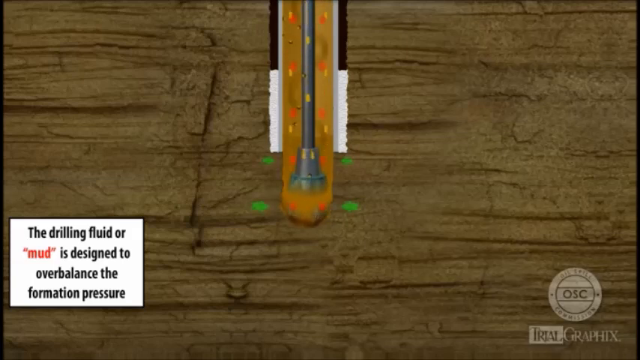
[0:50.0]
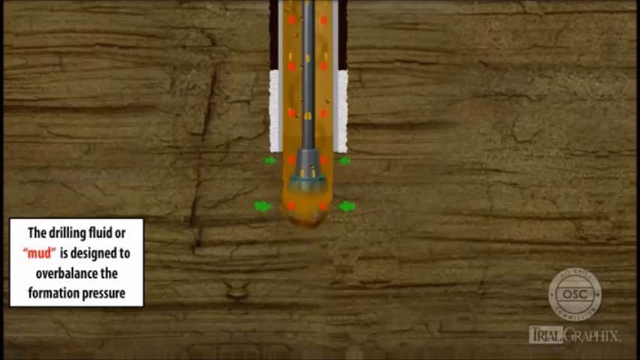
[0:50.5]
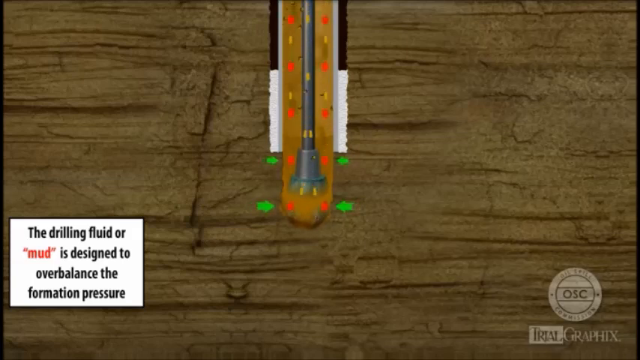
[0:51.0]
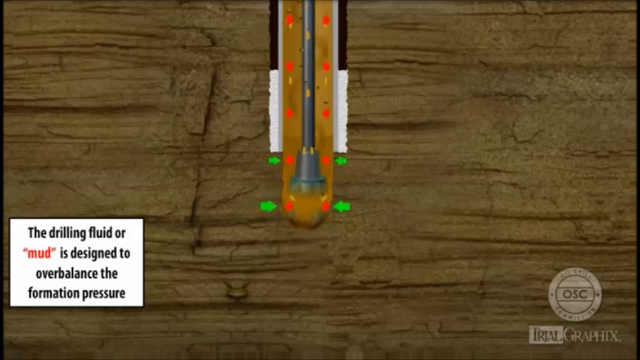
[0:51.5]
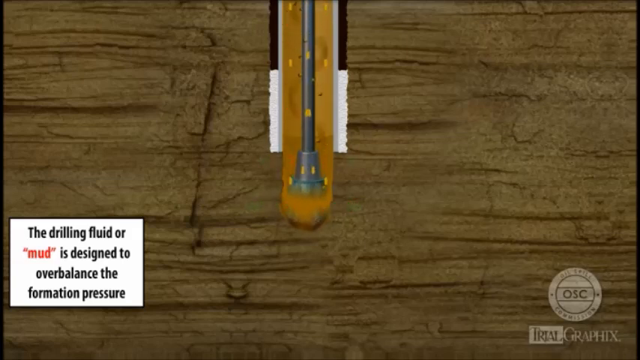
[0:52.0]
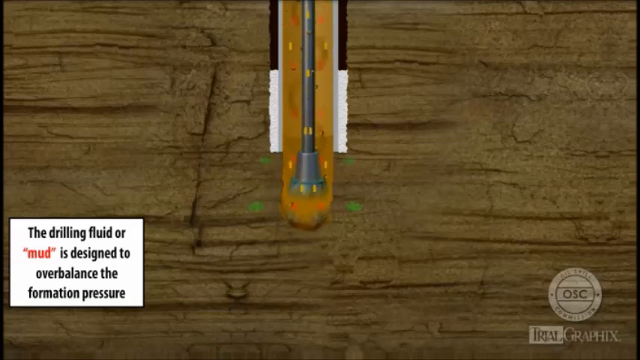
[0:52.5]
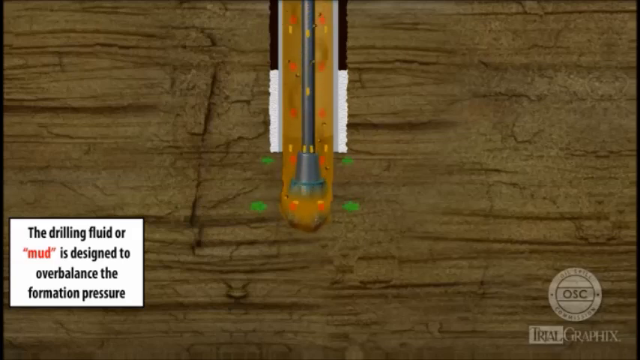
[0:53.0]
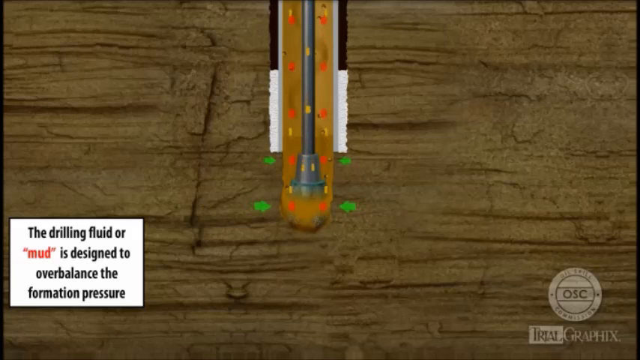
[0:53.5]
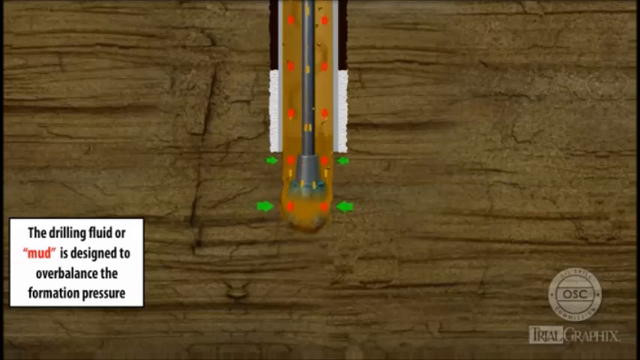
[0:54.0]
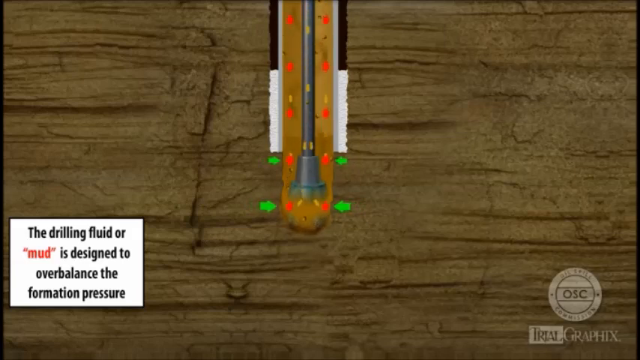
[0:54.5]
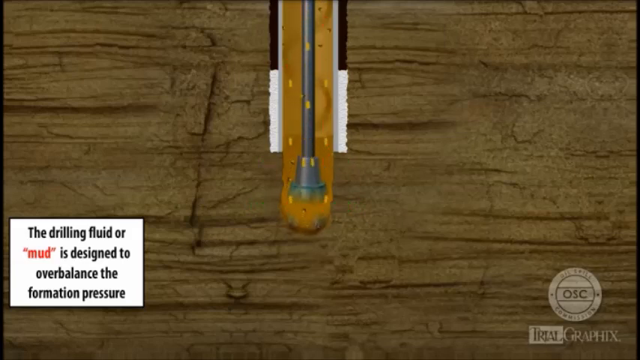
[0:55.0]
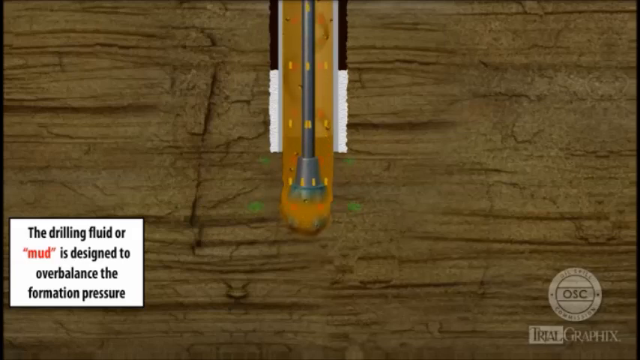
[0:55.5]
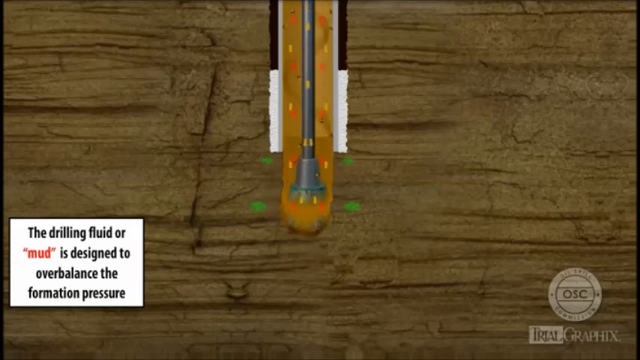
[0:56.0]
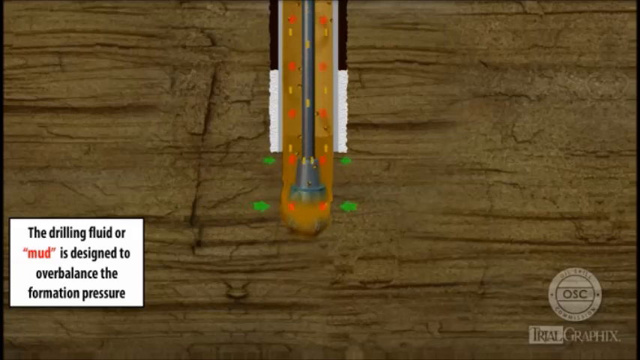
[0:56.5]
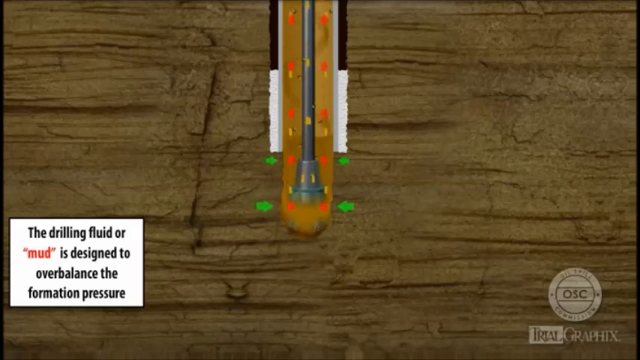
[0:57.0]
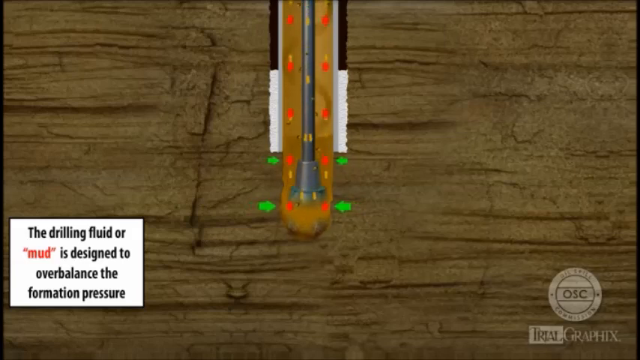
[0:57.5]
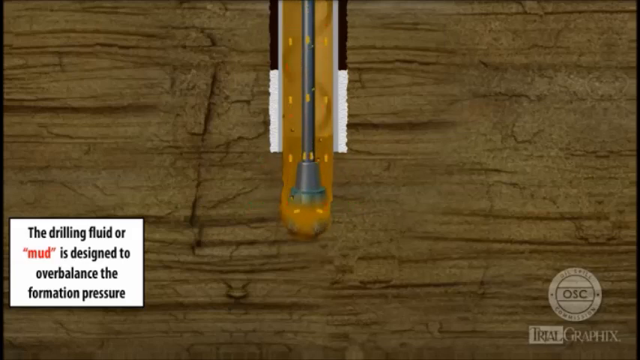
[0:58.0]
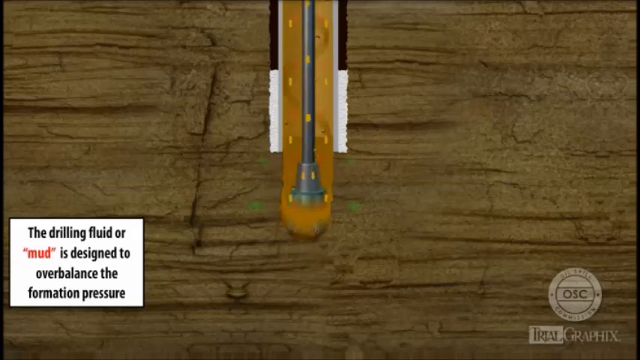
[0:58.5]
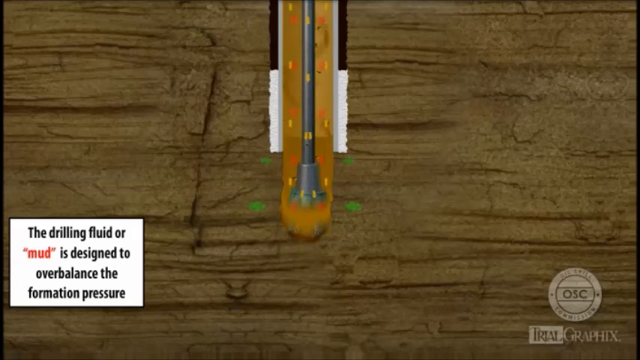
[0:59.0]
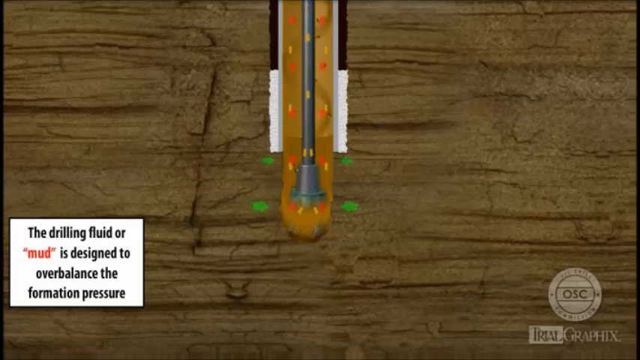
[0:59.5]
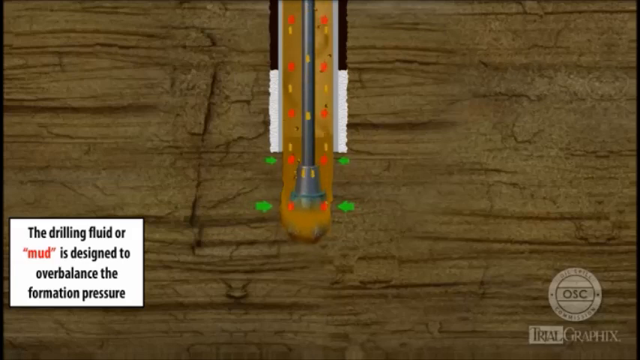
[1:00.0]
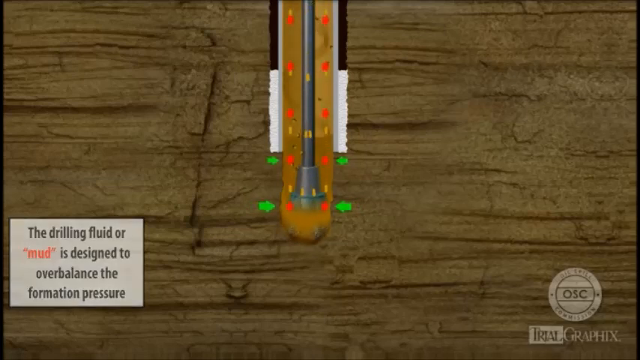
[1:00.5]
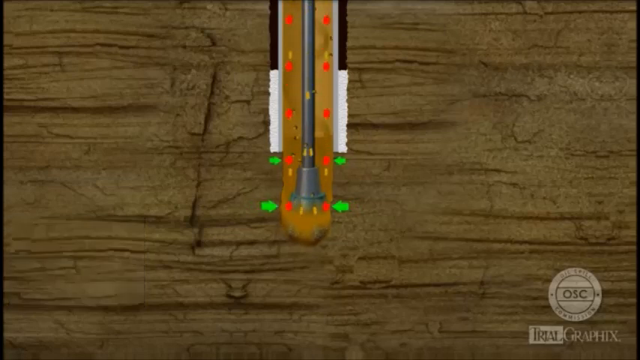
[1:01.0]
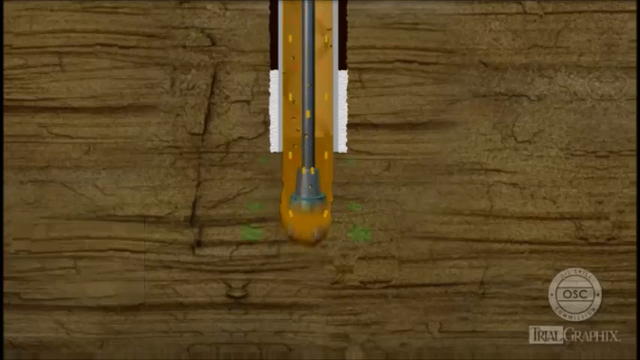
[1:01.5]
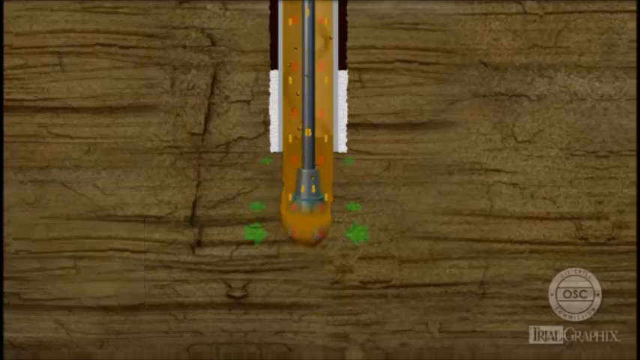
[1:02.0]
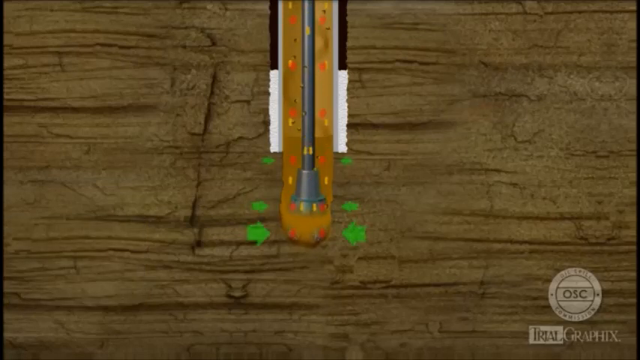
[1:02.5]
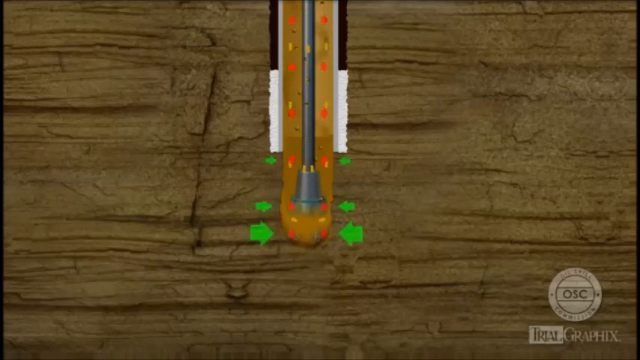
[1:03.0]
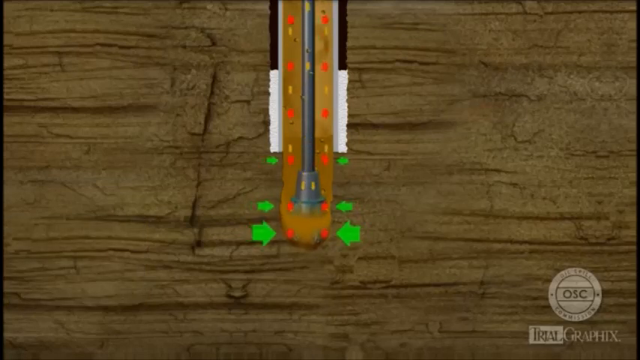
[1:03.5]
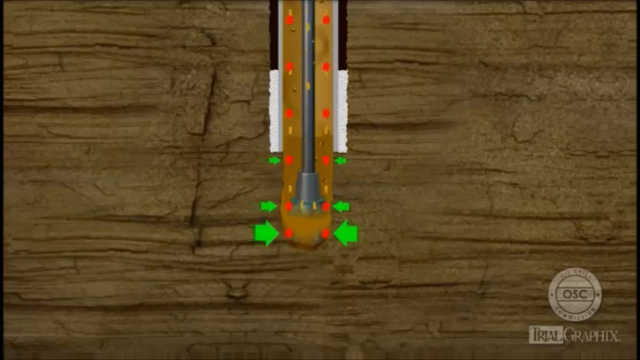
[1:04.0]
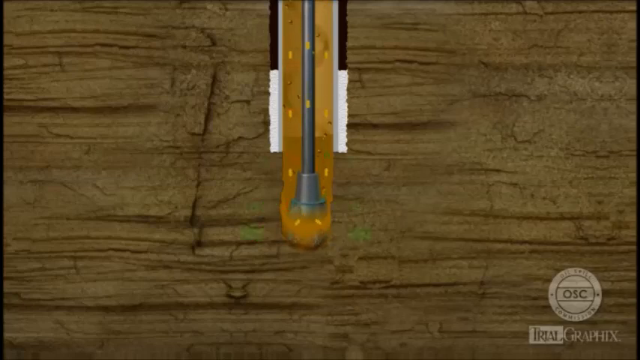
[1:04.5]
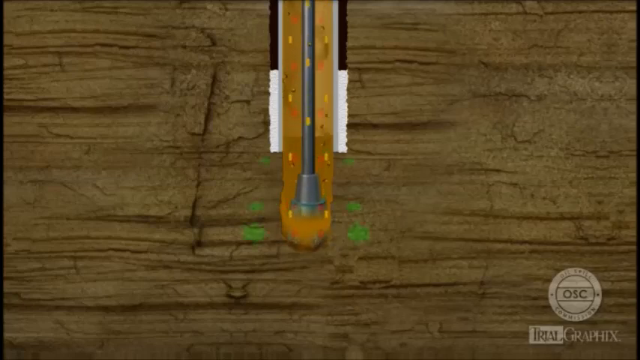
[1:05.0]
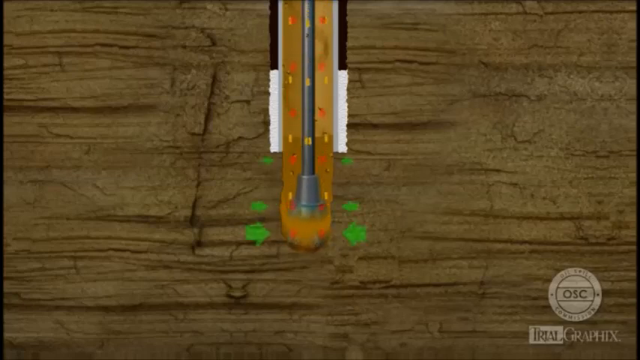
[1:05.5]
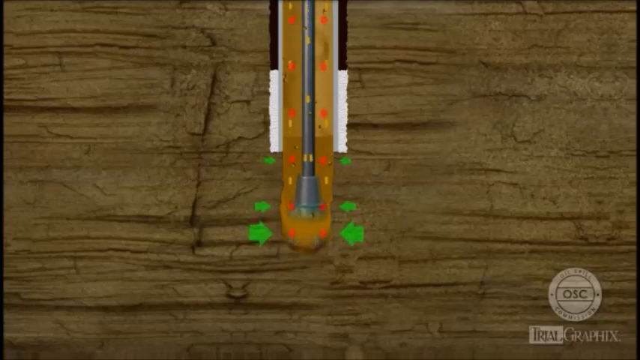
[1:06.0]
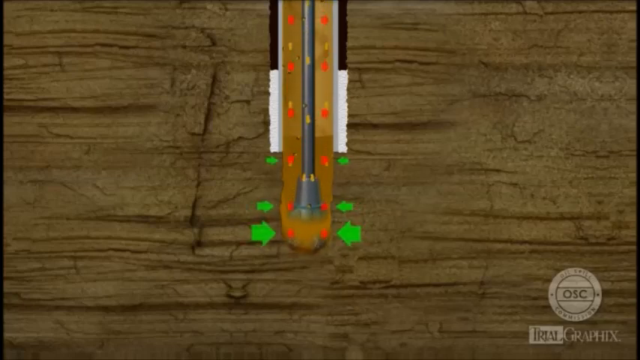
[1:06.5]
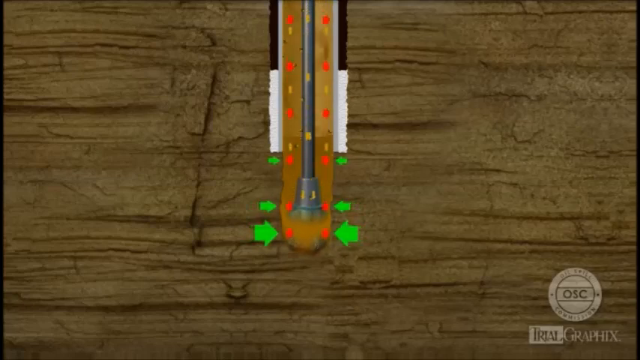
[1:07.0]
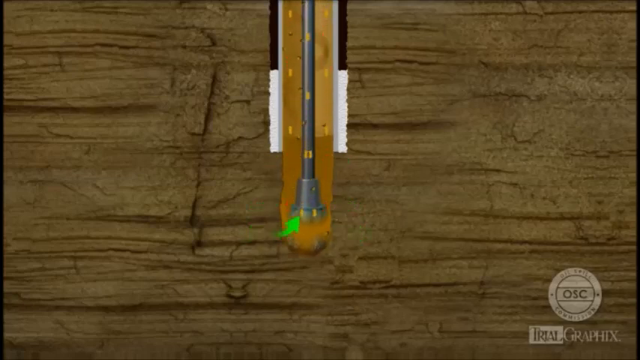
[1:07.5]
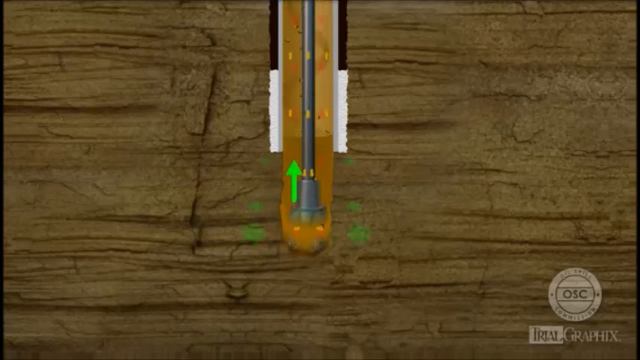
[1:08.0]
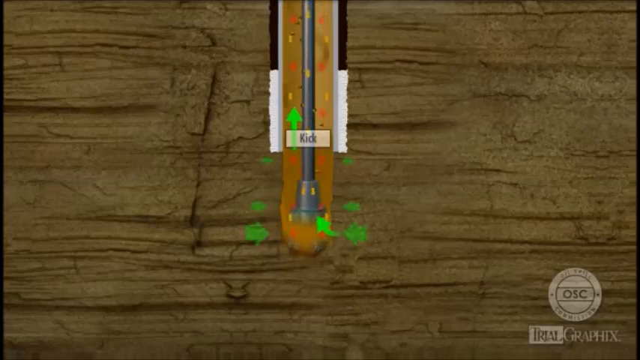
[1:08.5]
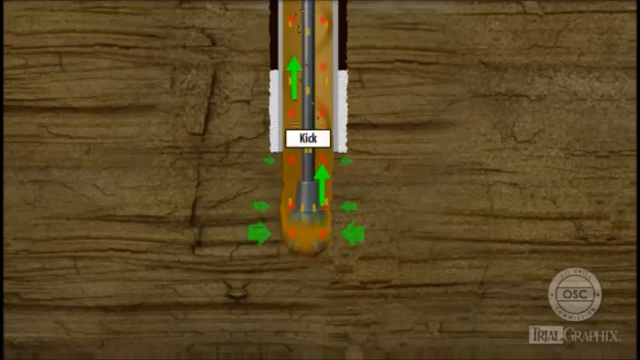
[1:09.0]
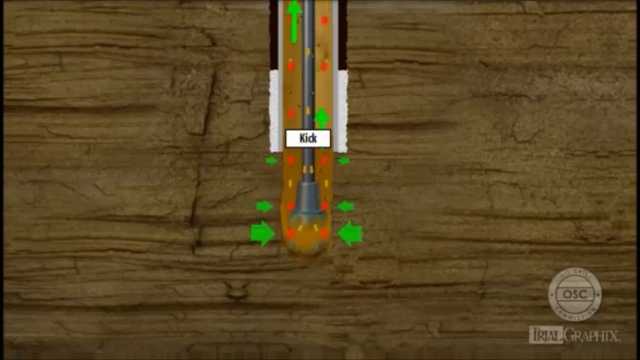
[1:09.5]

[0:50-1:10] The drill continues moving downwards through the block of wood. Toward the bottom left, the words "the drilling fluid or mud is designed to overbalance the formation pressure" appear in black font, except for the word "mud", in front of a rectangular white background. "OSC" with the logo is at the bottom right. Yellow and red particles move upwards as the drill descends. Four small arrows point toward the very tip of the drill, moving slowly and fading out. Then two more arrows, green and larger than the other four, move in the same fashion, and two green arrows move upwards, opposite to the drill's direction of movement.